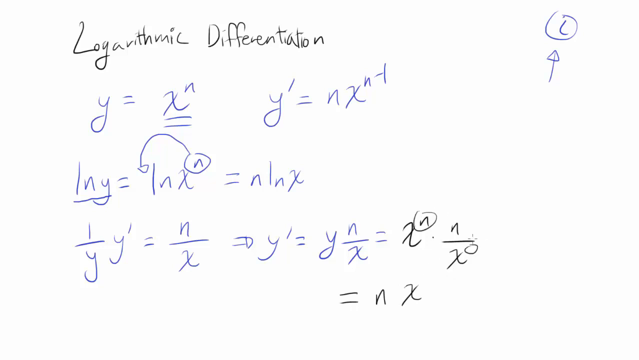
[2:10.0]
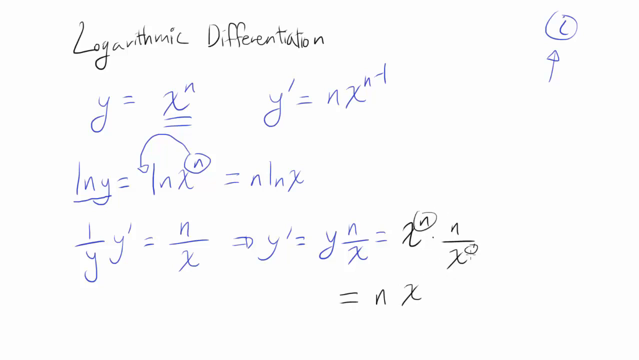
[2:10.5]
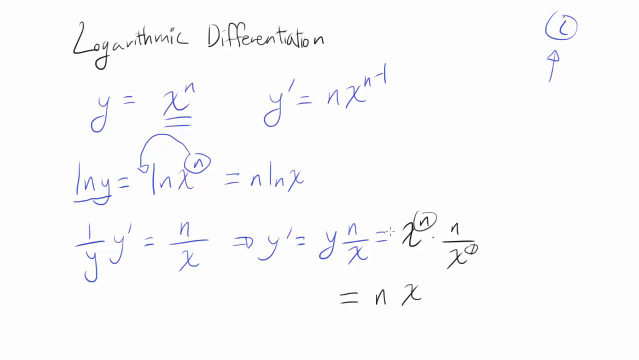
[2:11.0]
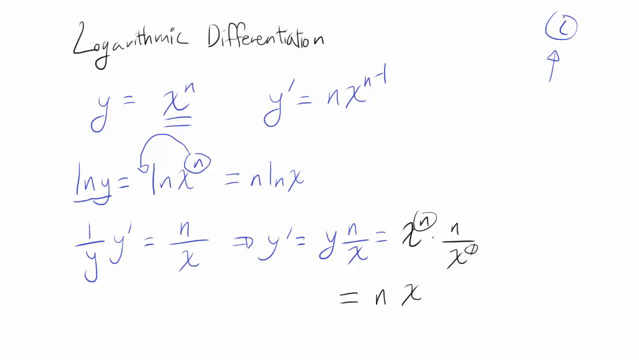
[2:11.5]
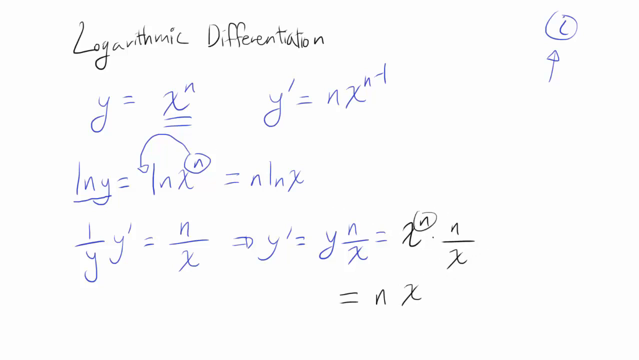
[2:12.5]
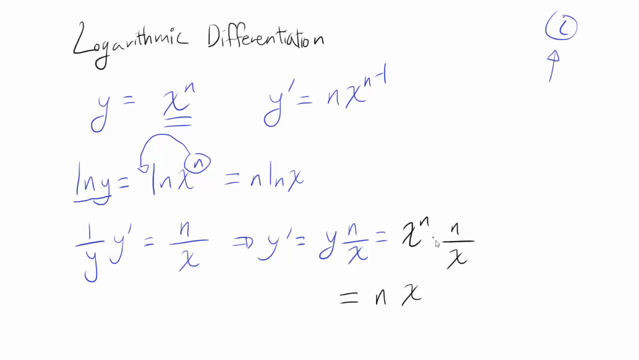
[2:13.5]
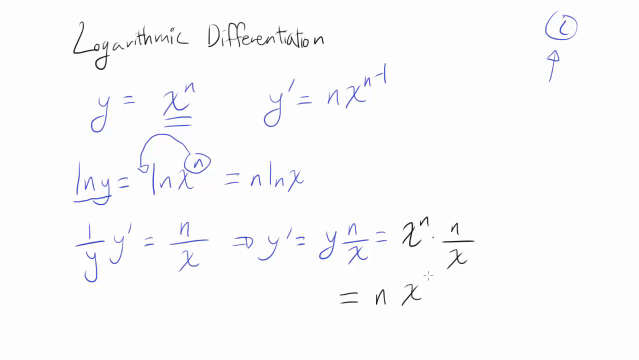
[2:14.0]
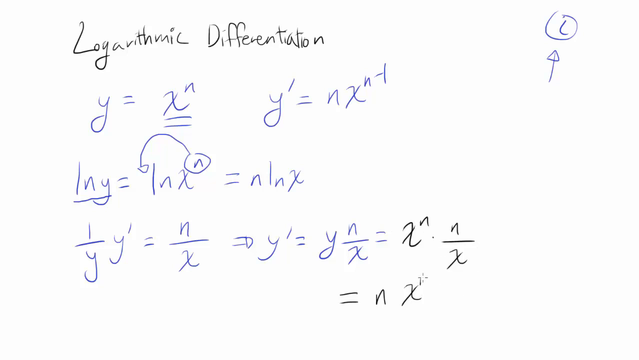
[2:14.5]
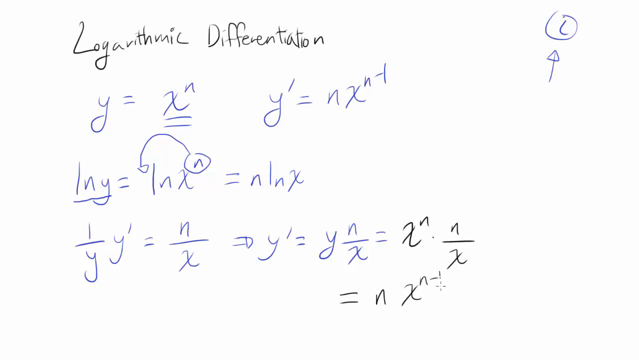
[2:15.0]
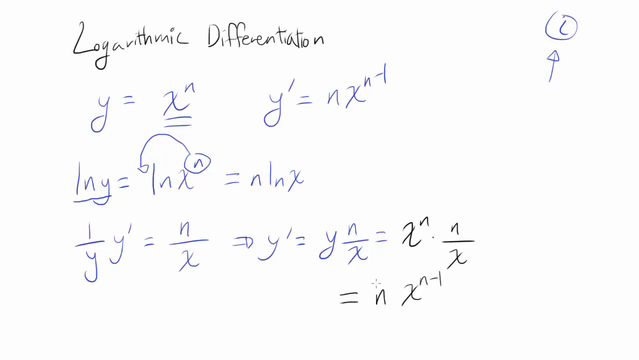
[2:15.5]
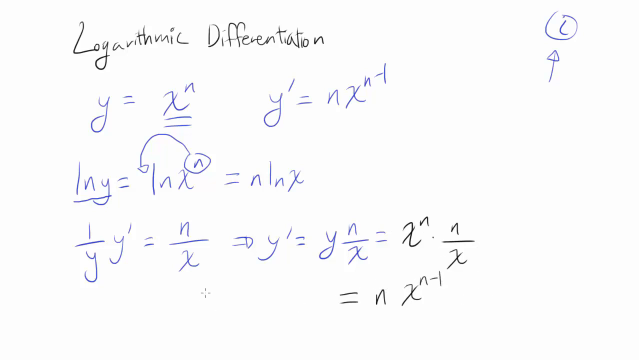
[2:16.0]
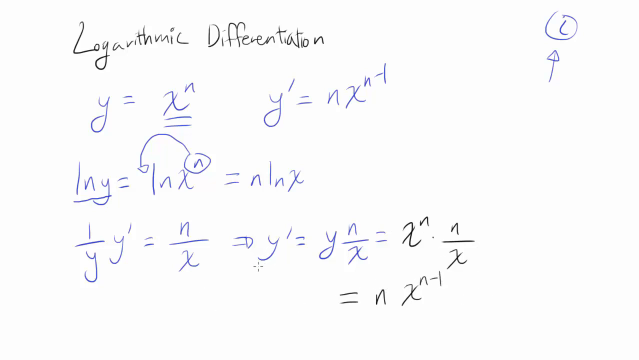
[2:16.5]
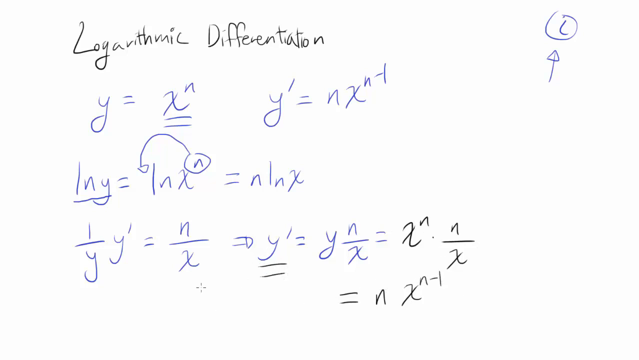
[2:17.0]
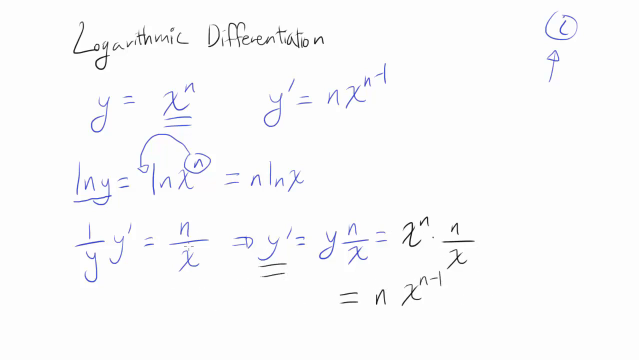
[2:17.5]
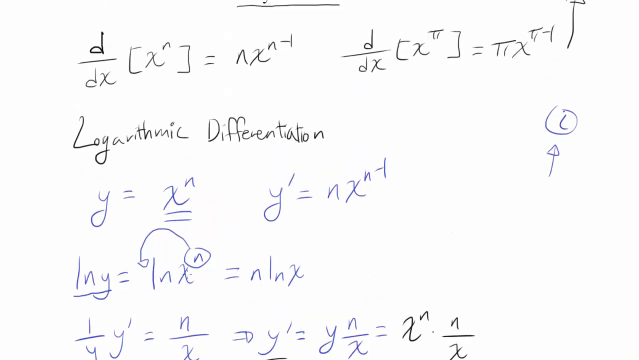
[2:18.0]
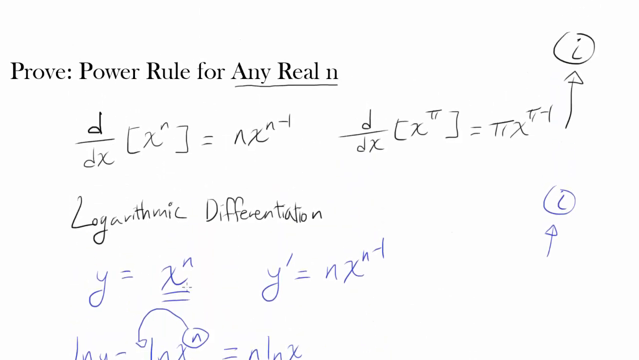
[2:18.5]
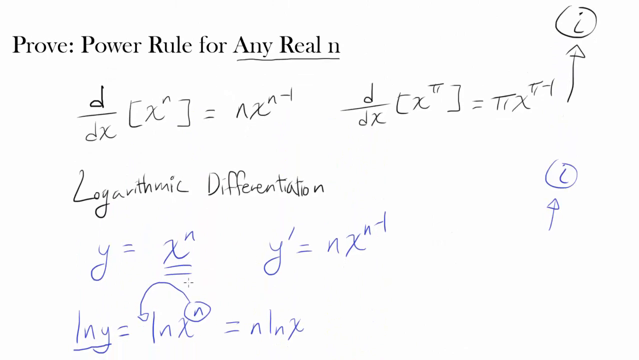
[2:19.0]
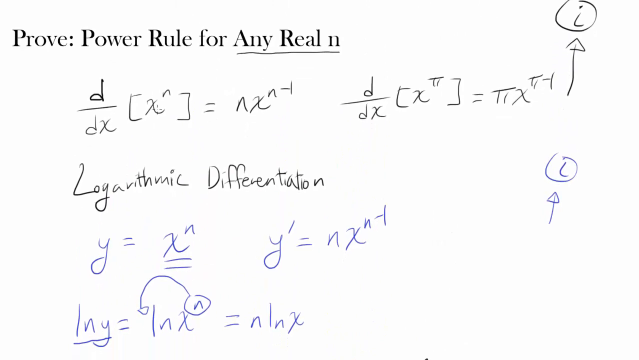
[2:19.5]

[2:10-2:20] A white screen shows "logarithmic differentiation" in black, with numerous equations below it; three lines are in blue. The view scrolls up to the last equation, which is one over y with a y beside it. On the fourth line is an equals sign with n and x, and the small cursor writes a small "n minus 1" at the upper right beside the x. The cursor then pulls the screen so the view moves to the top of the page where the letters and numbers have been written.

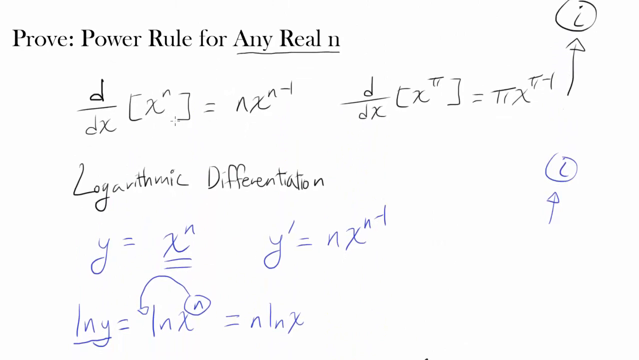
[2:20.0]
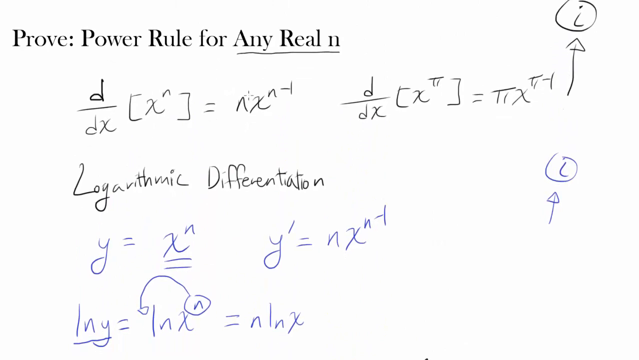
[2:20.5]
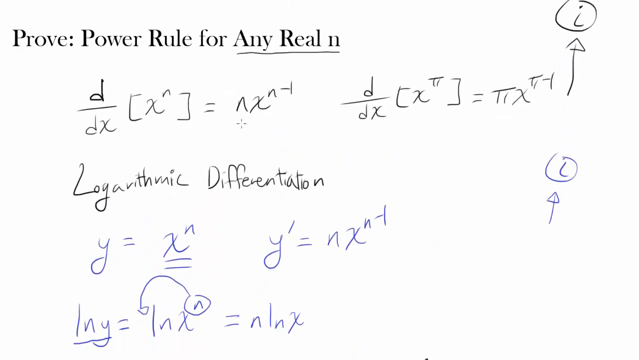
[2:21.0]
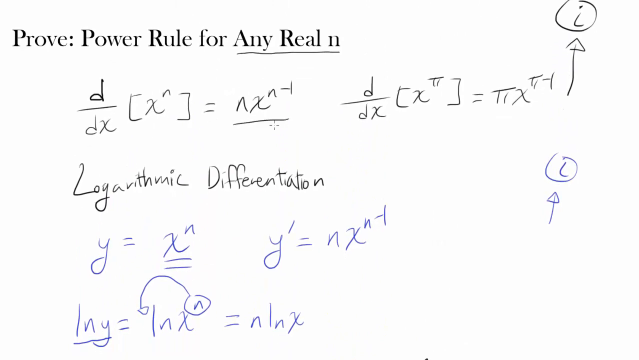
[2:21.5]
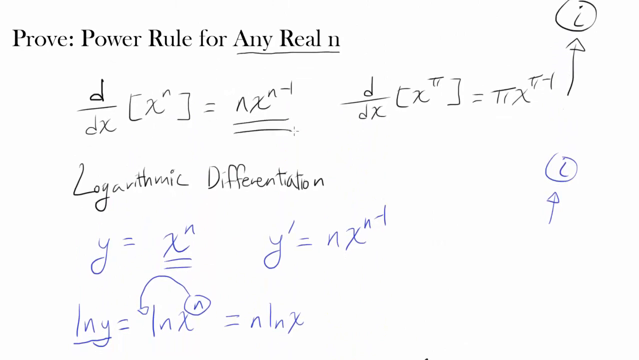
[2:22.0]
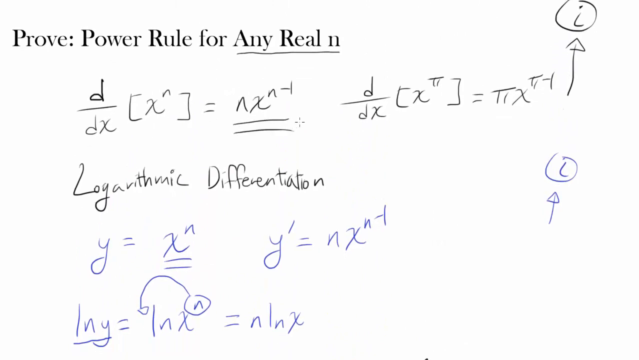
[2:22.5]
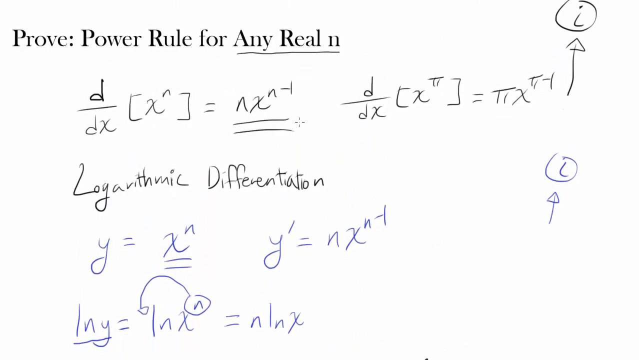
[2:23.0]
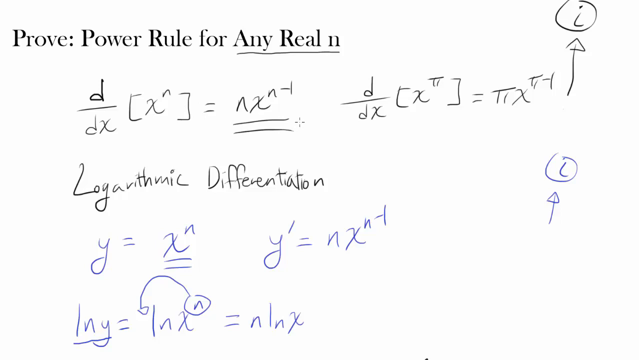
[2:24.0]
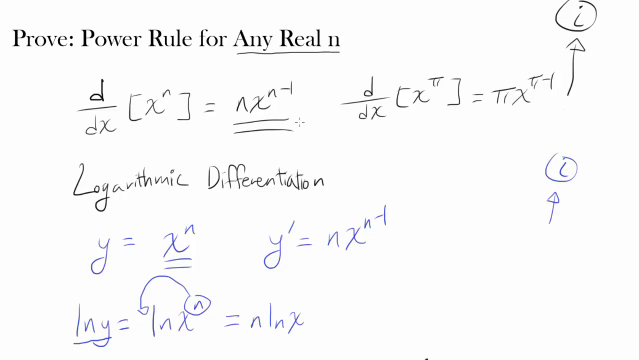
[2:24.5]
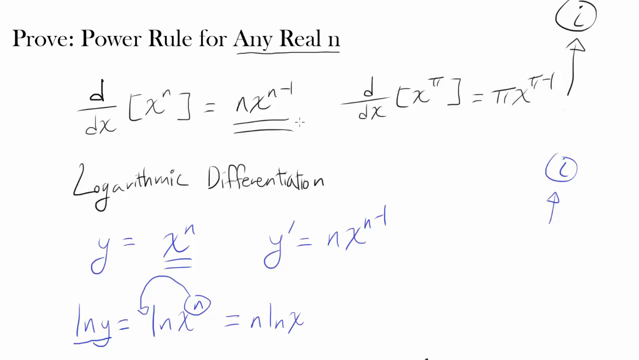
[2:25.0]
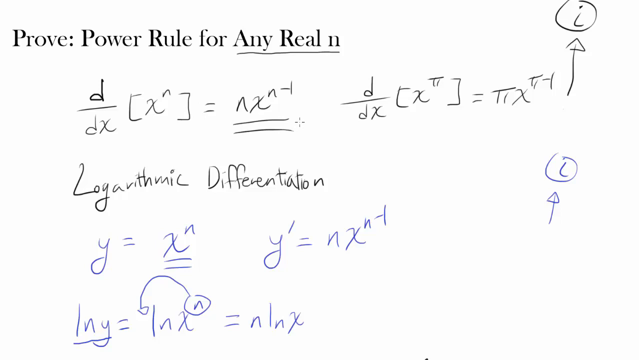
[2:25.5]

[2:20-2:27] A whiteboard has many different letters and numerals on it. The first equation is in dark writing, and a small cursor puts two lines under the n and the x, with a small a minus 1 at the top right corner. The second equation follows below. The top portion is in black and the bottom portion is in blue. The very small cursor changes at one point from an arrow to a small line. On the far right is a blue line with a triangle on top, pointing up toward an L with a circle around it.